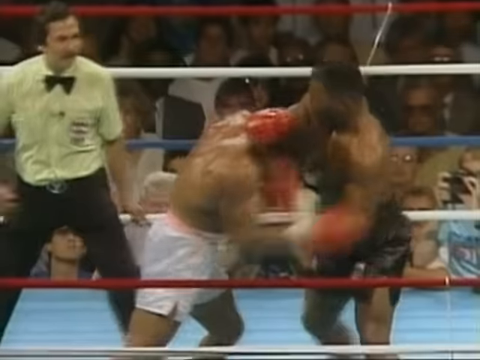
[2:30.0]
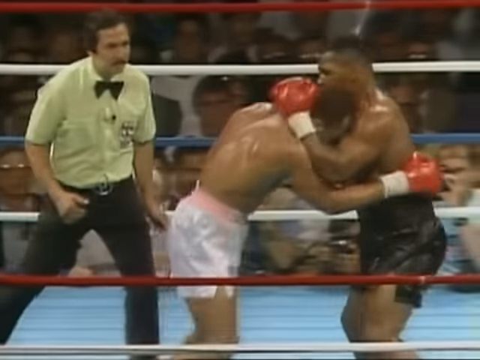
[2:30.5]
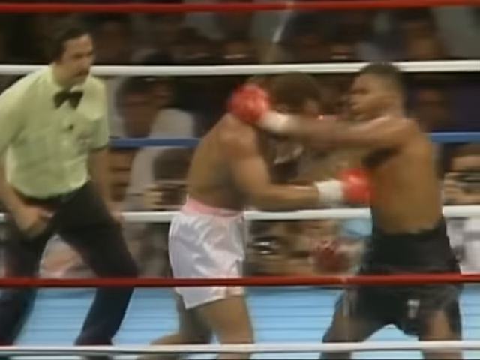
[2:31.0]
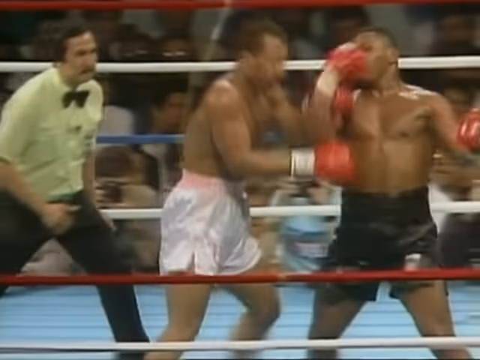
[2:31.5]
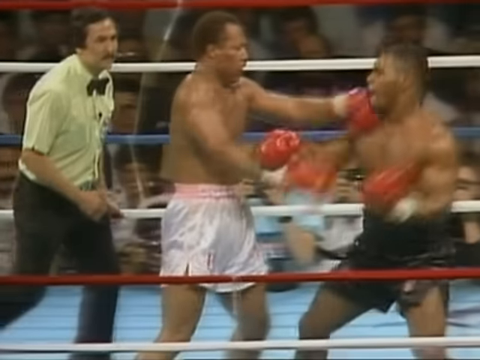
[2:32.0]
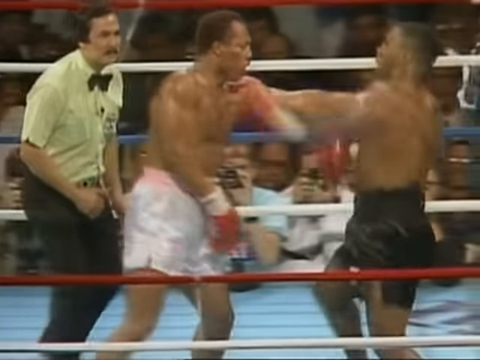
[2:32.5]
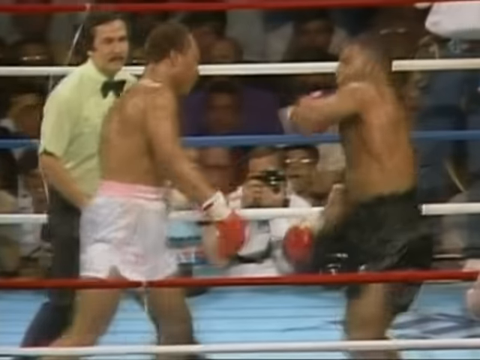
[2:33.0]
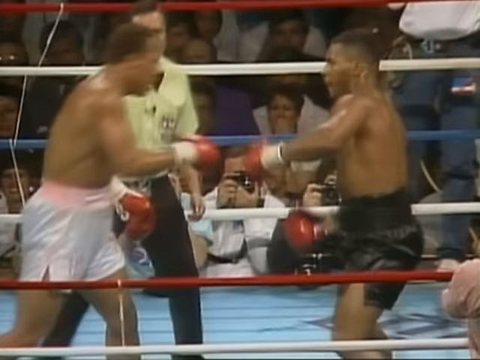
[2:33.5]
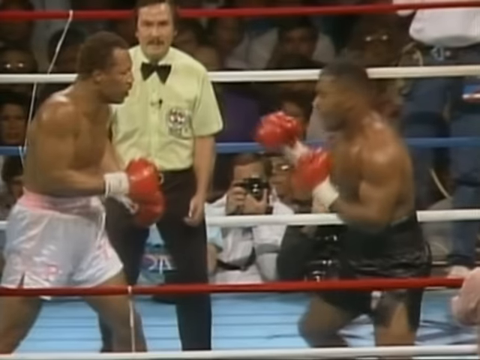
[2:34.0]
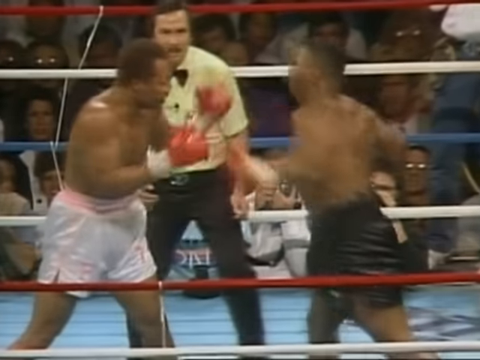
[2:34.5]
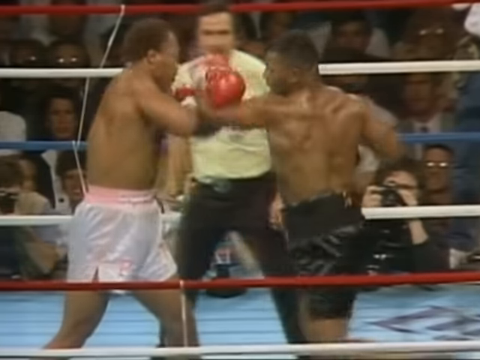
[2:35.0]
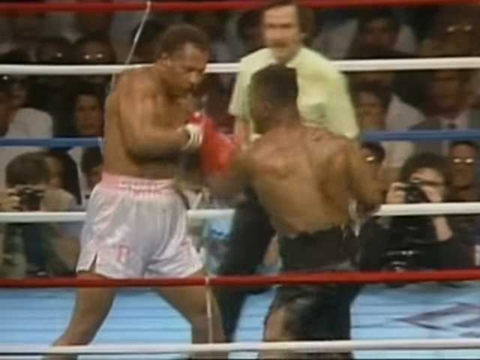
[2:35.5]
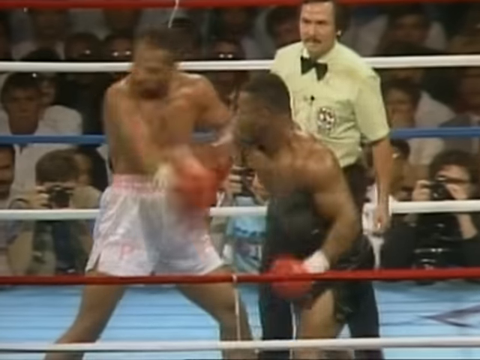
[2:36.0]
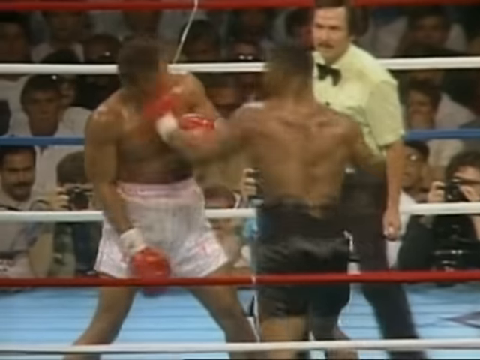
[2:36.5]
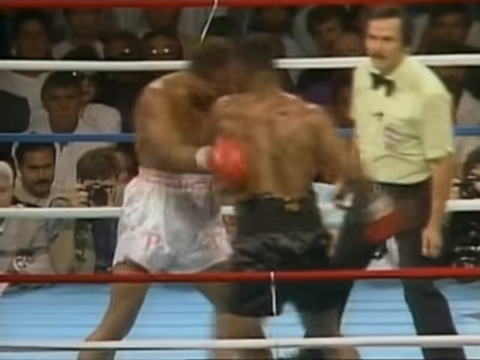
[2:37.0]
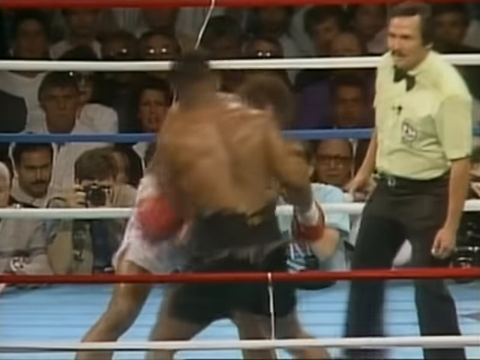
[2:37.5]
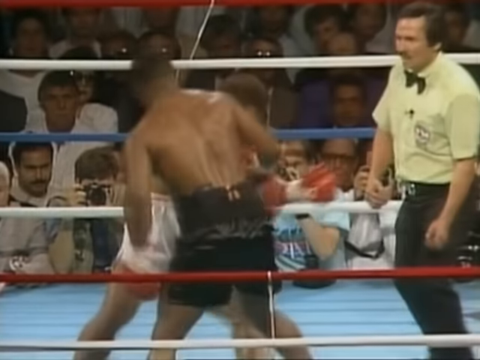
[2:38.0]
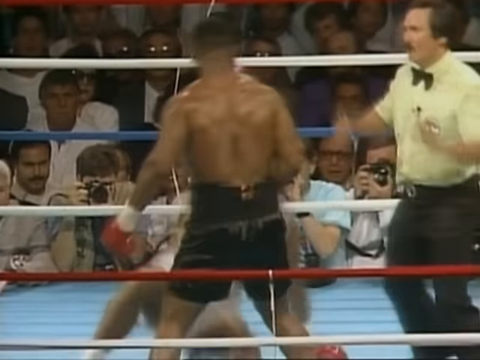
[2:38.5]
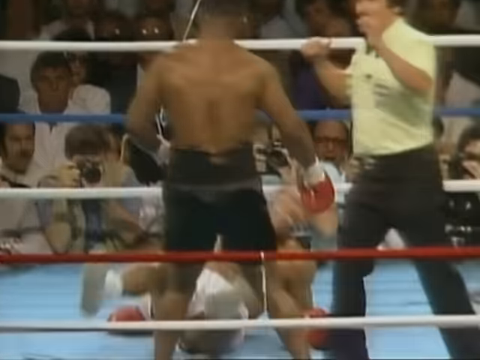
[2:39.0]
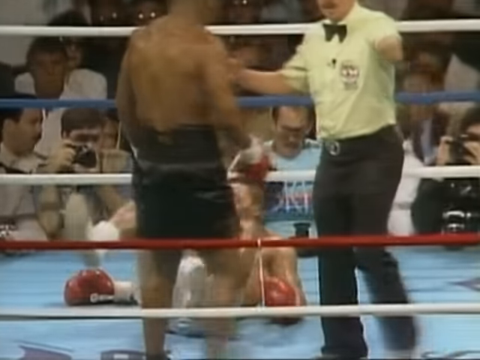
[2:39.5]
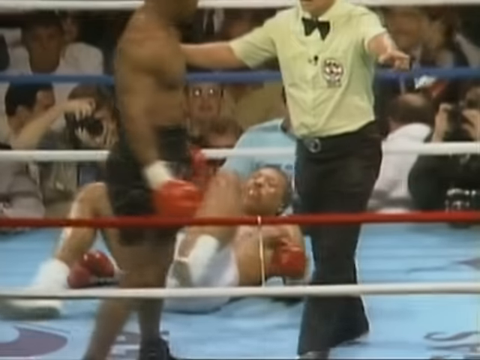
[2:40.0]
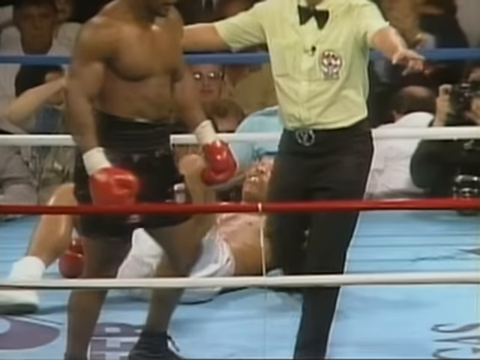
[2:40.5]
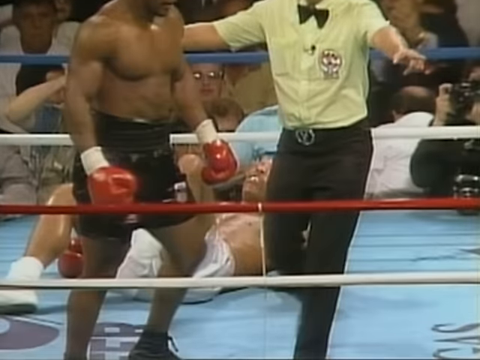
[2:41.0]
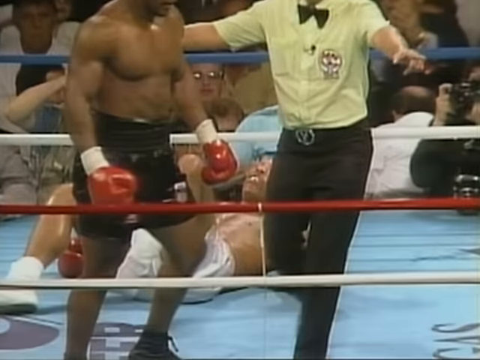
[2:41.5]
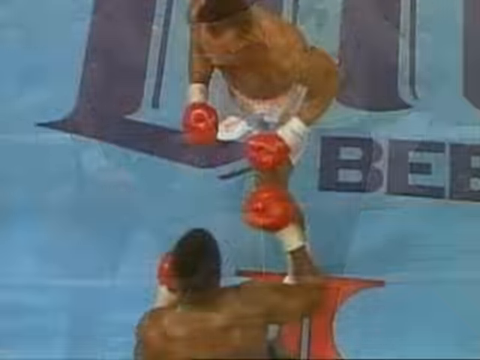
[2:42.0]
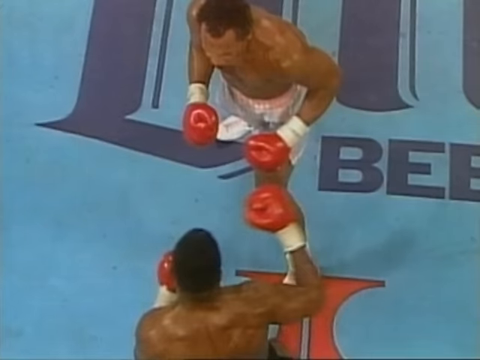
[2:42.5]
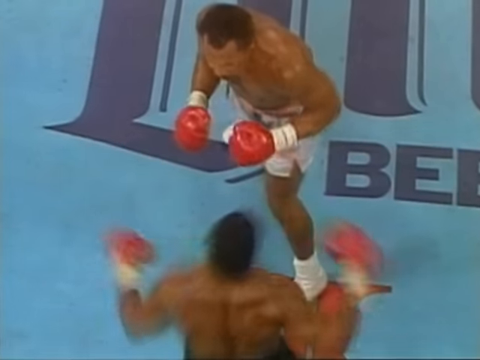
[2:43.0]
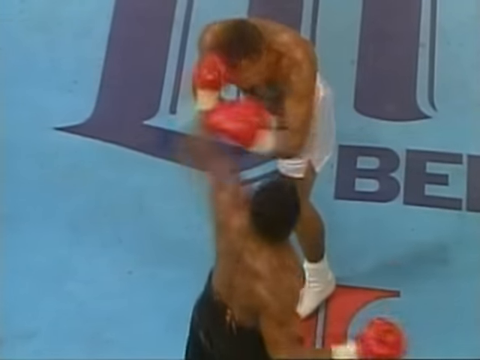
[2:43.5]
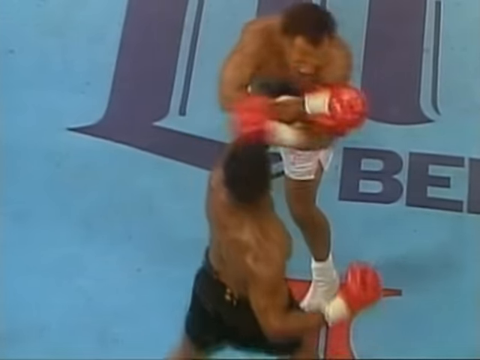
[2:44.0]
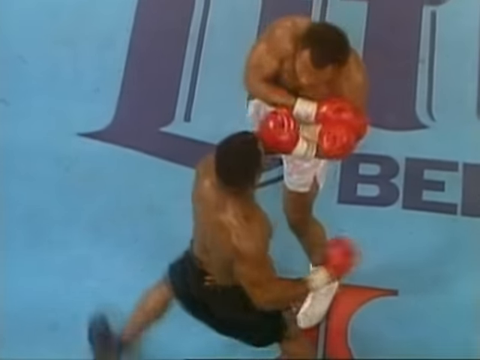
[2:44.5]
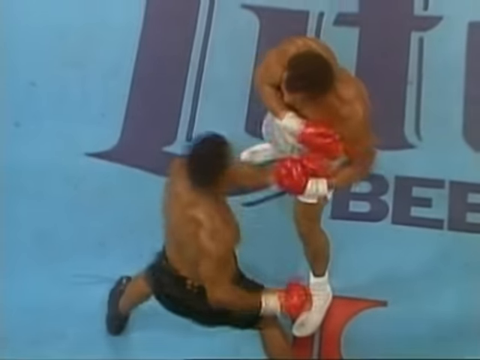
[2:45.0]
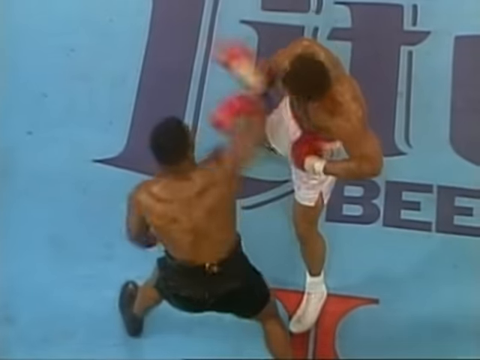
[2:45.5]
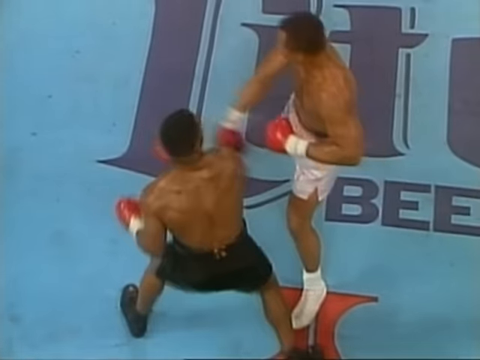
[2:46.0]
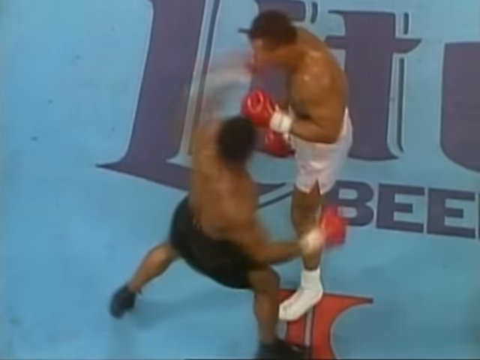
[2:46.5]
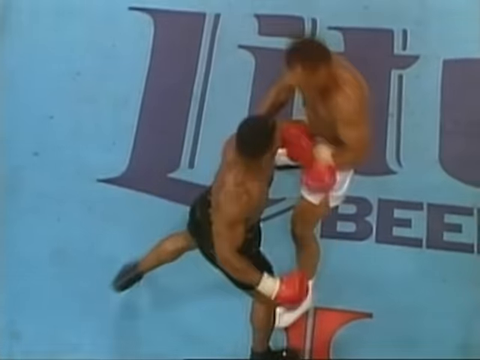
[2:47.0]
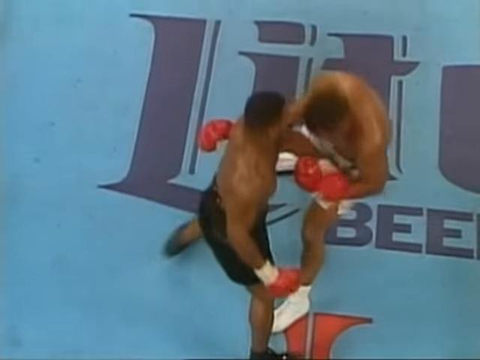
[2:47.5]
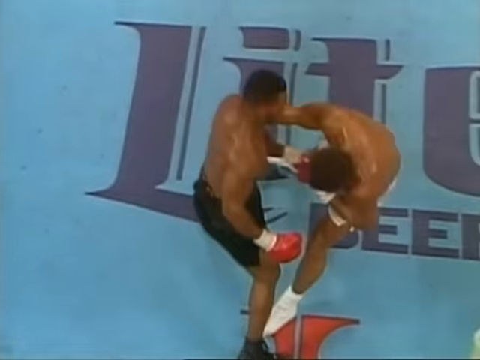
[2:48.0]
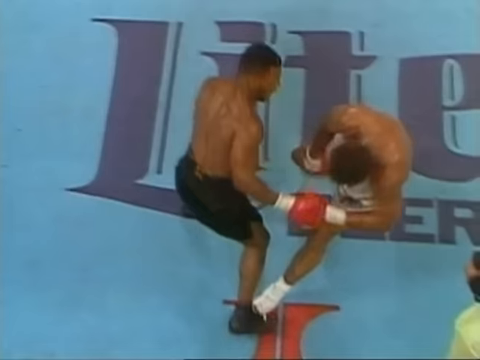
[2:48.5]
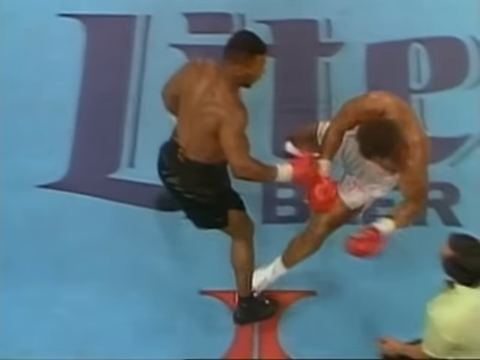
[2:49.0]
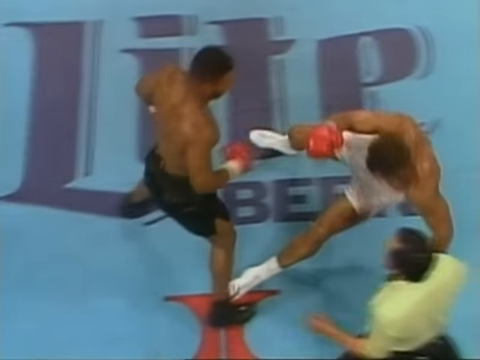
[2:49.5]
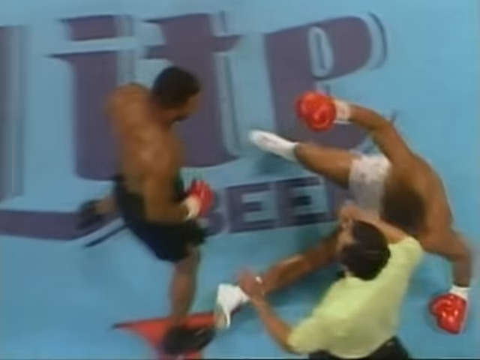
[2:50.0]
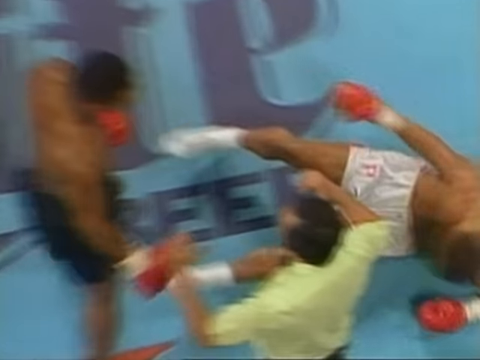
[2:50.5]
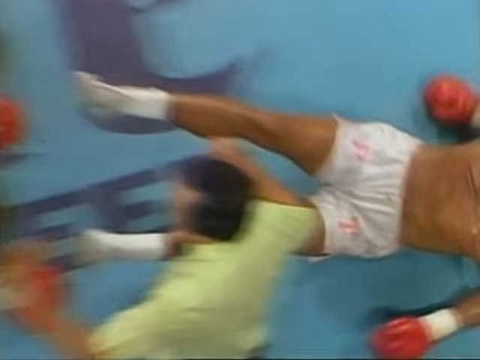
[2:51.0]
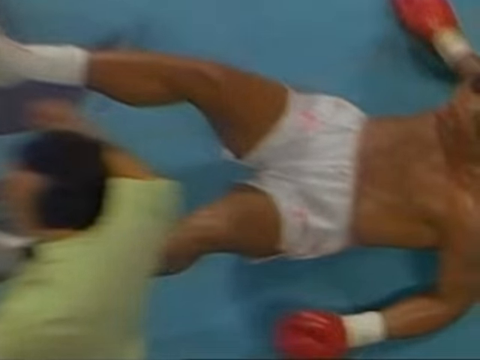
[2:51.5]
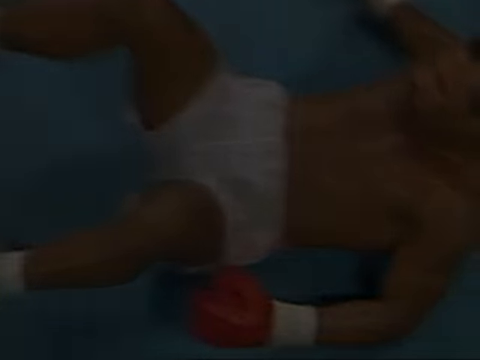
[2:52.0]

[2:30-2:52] In slow motion, the camera looks in at the fight with Tyson on the right and the boxer in white trunks on the left; the referee is behind, to the left. Tyson lands a left hook, another left hook, then a right and another left, and the boxer goes down. The referee comes in and takes his right arm to tell Tyson to go to his corner. The view transitions to an overhead look at the same combination: a left, a right that misses, then a left that connects, and in slow motion the fighter goes down. The video then fades to black.